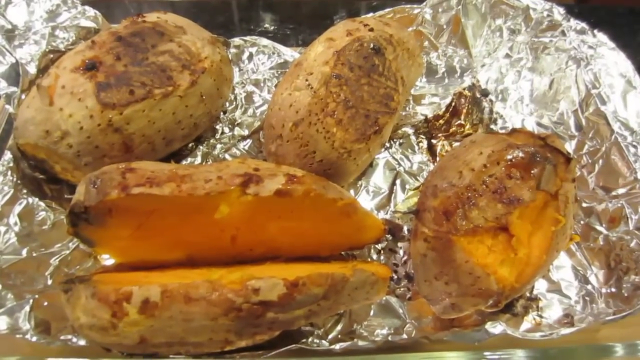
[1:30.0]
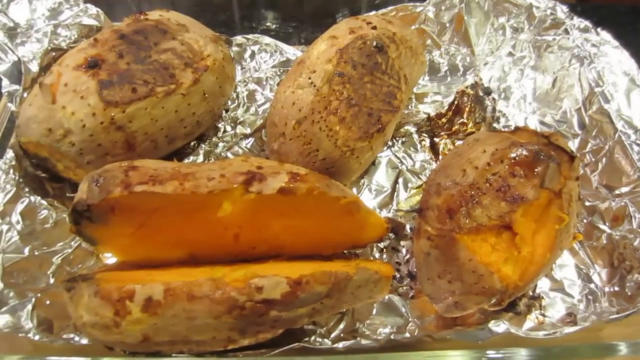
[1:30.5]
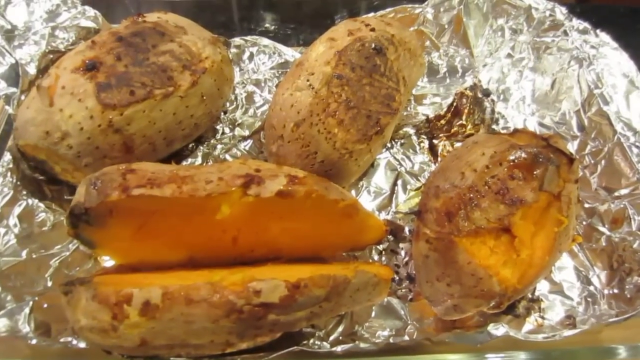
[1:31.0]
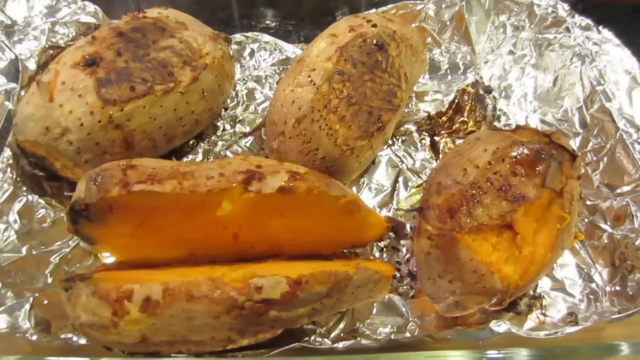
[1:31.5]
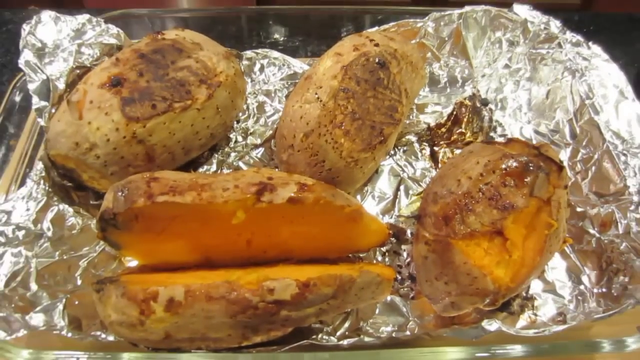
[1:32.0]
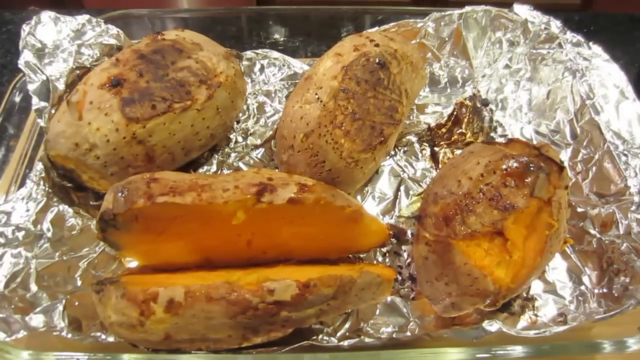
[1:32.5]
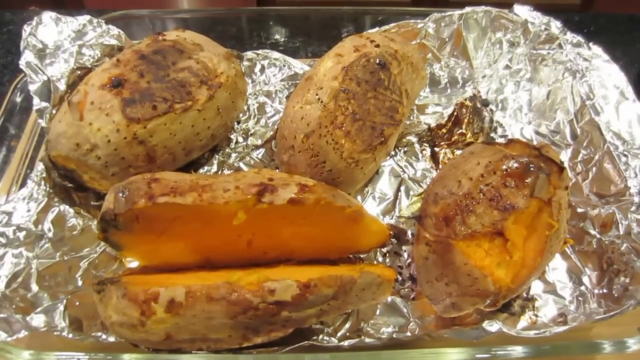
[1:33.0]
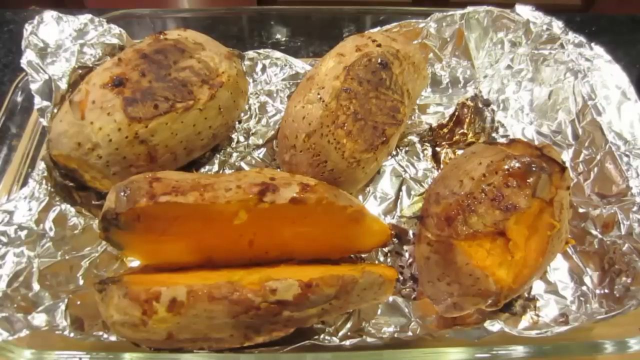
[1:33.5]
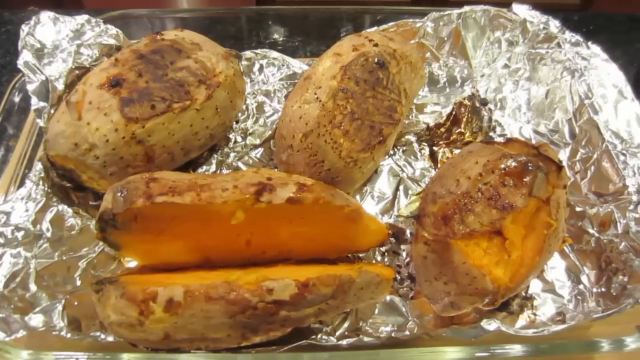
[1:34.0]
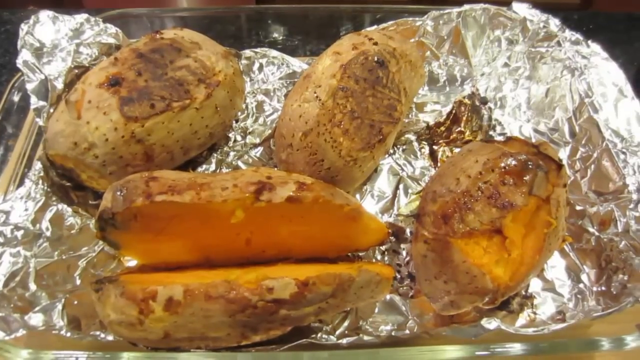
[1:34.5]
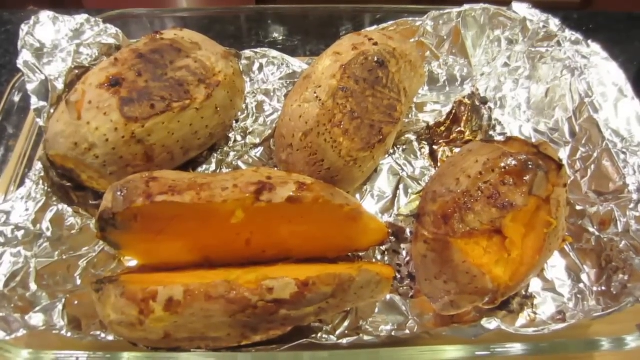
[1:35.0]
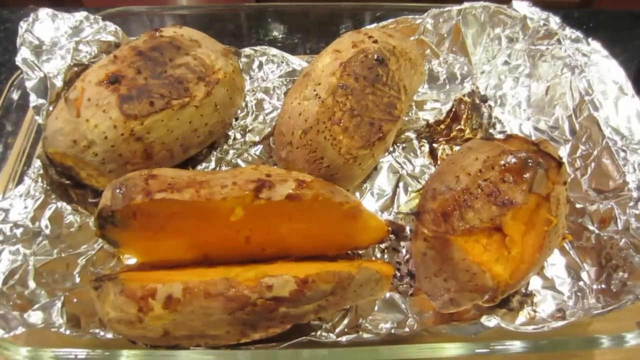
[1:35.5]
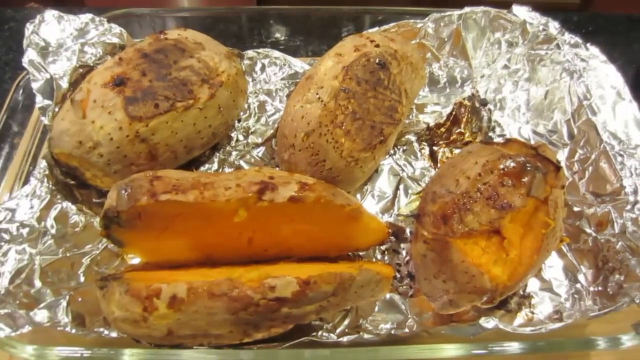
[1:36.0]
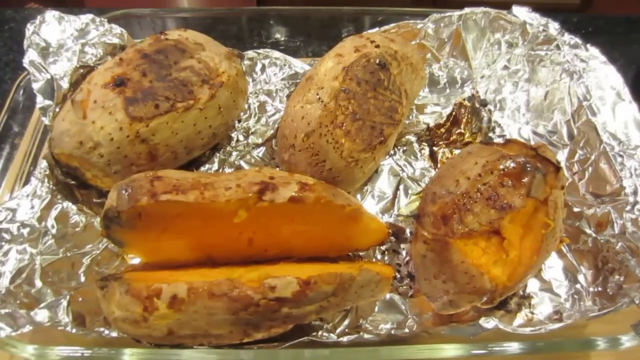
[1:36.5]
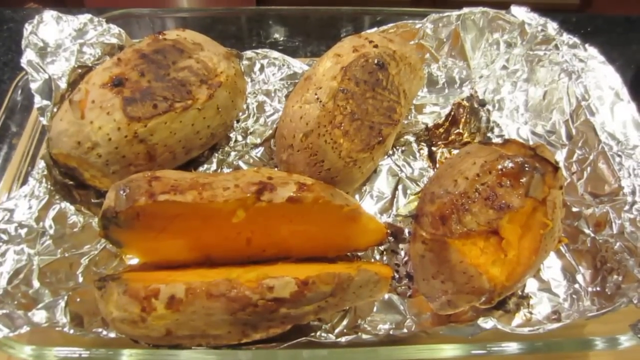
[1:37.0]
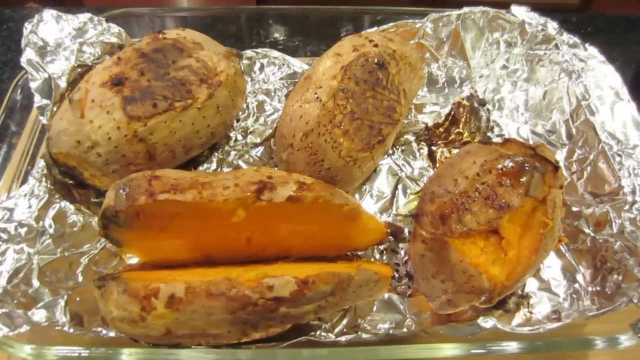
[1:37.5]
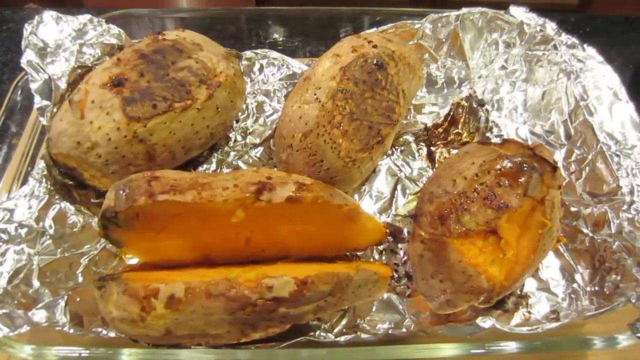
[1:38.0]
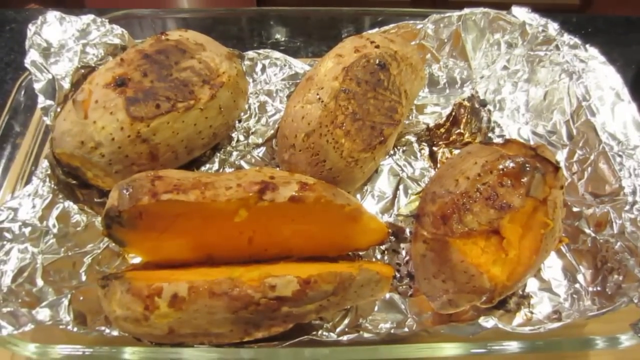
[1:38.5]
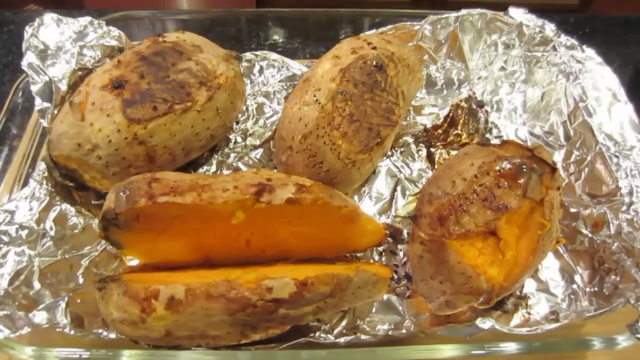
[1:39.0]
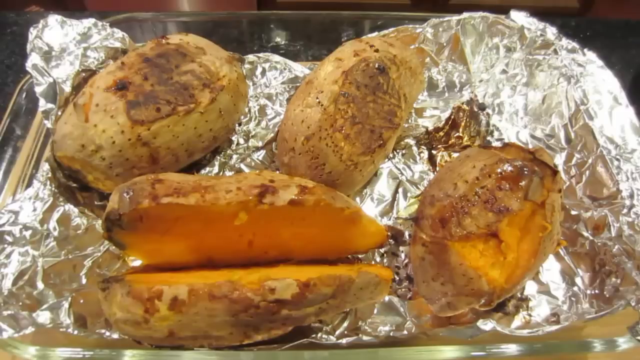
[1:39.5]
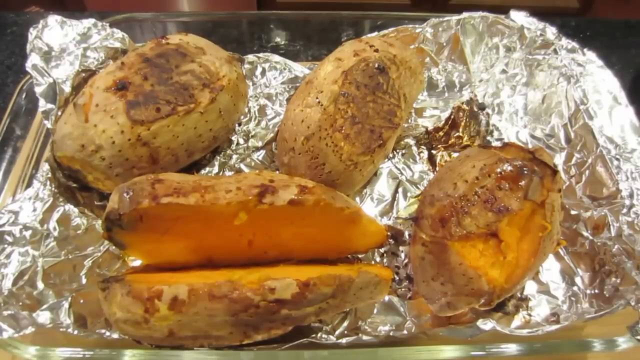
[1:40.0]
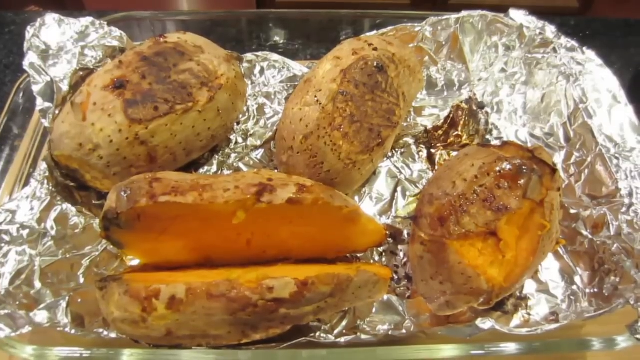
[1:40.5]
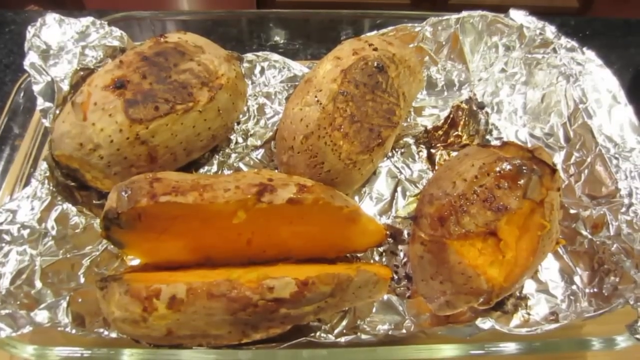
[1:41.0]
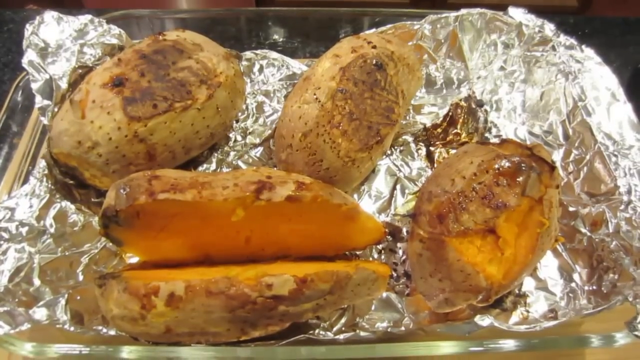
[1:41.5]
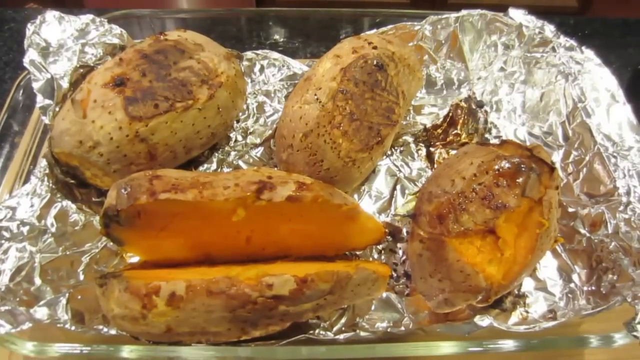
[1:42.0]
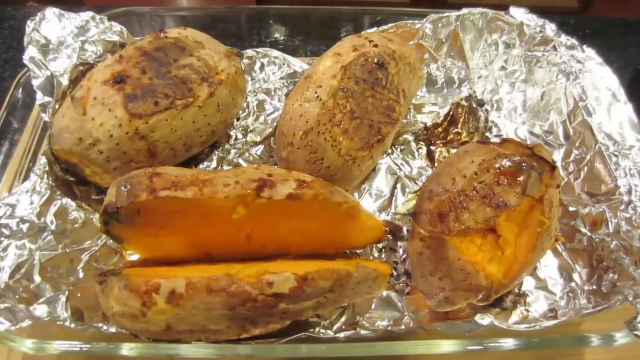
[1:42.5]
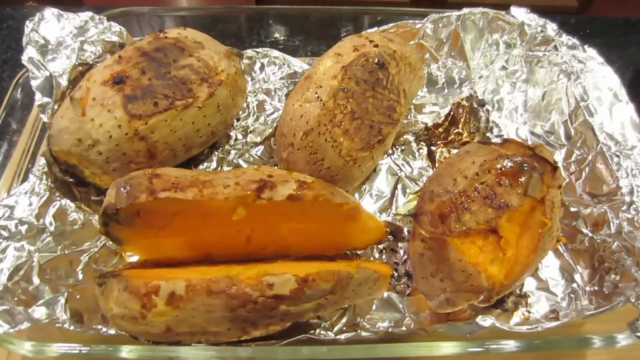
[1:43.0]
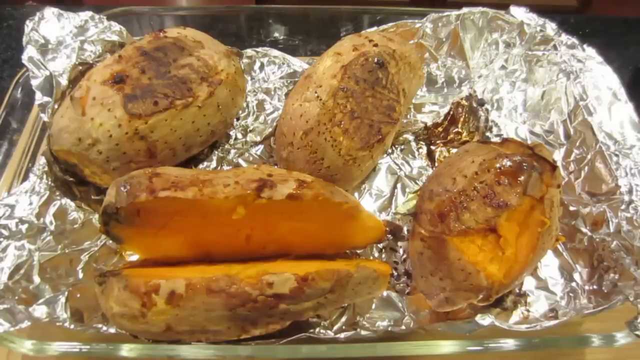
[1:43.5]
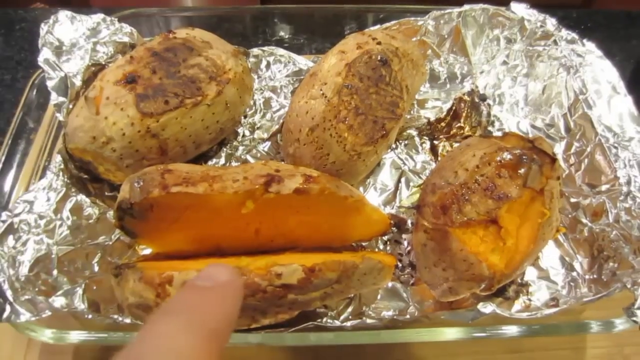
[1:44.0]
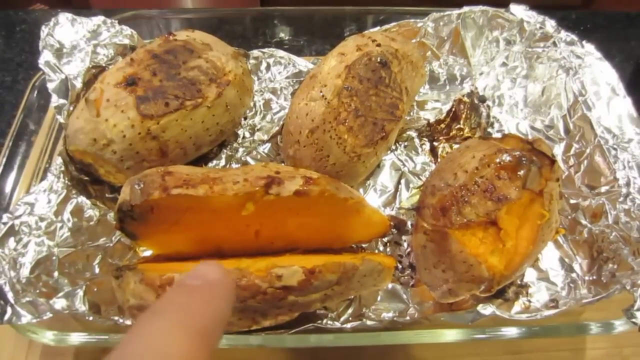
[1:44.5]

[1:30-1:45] Four sweet potatoes are seen from the top looking down, arranged on a crumpled piece of aluminum foil laid out in a deep glass baking dish. The sweet potato in the lower left faces horizontally and is cut open right down the middle, showing its inside. Of the other three, two are above it and one is on the right side; they face up, slanted slightly toward the right. All the sweet potatoes have been cooked and their skins are browning. At first the camera is a little shaky but focuses on the sweet potatoes. Toward the end, a finger appears in the lower part of the frame and points at the cut-open sweet potato, appearing to point specifically at the cut-open part, where the dark orange inside shows it is fully cooked.